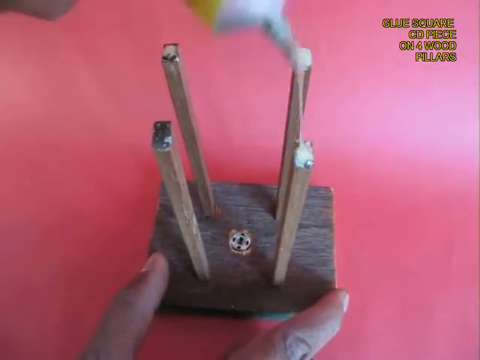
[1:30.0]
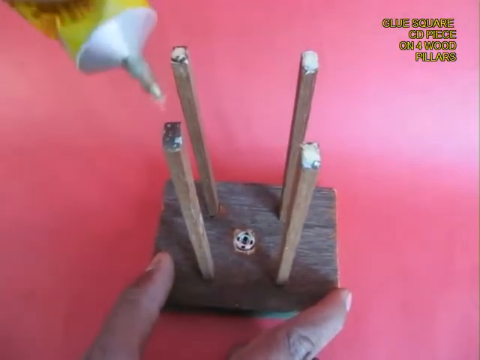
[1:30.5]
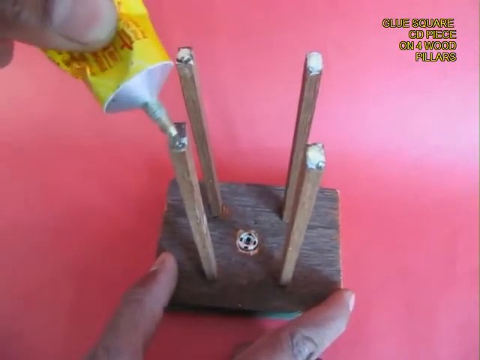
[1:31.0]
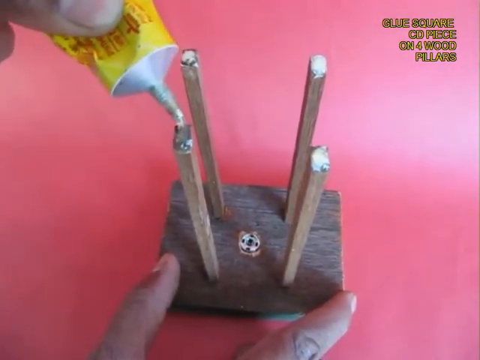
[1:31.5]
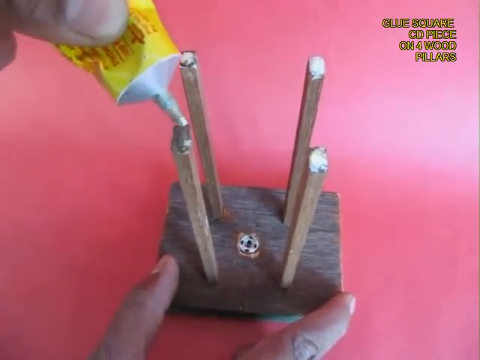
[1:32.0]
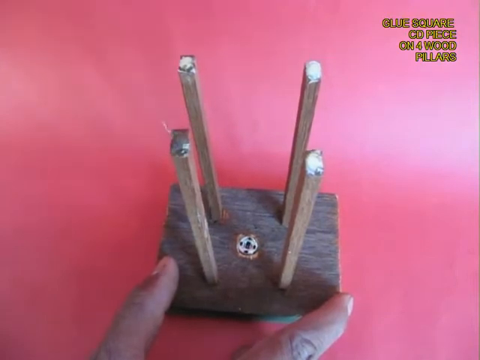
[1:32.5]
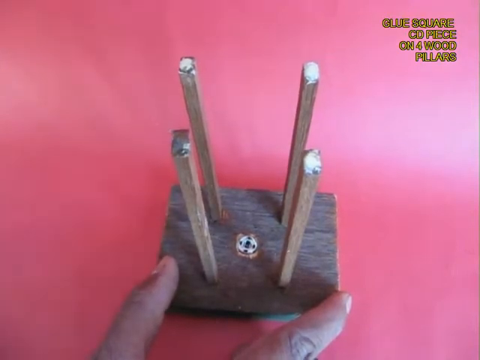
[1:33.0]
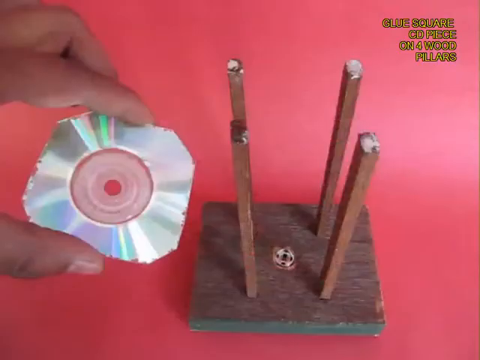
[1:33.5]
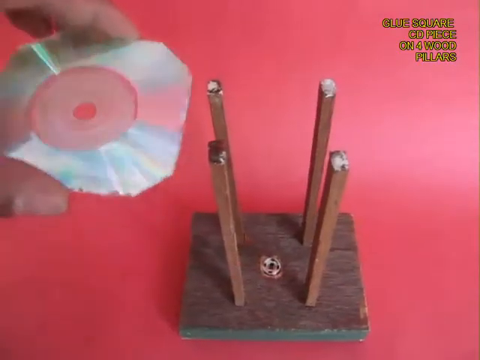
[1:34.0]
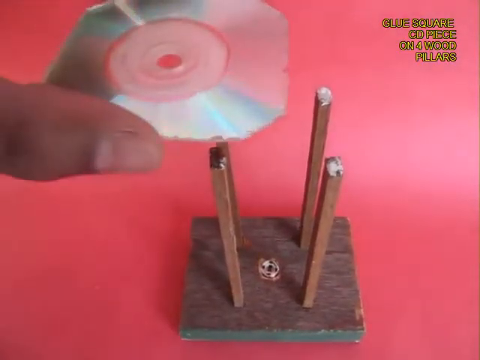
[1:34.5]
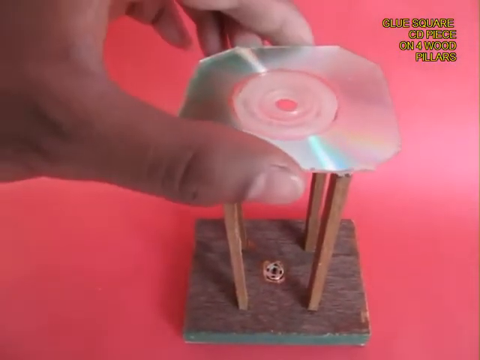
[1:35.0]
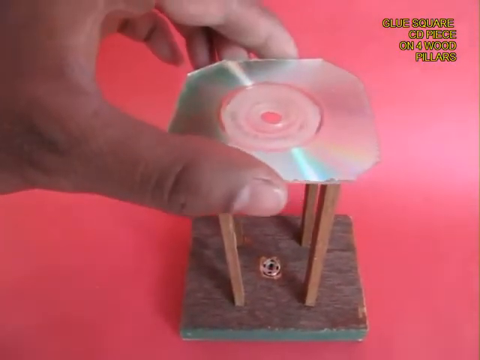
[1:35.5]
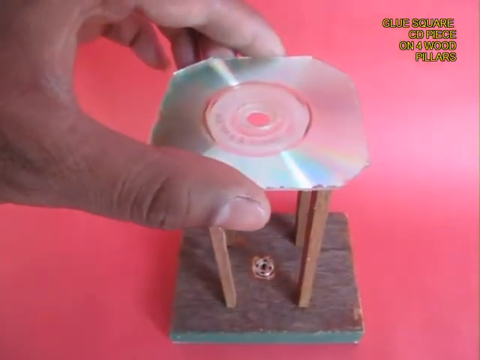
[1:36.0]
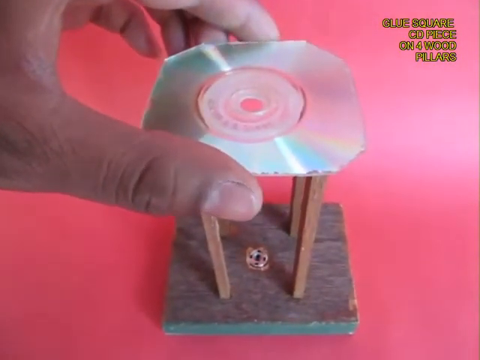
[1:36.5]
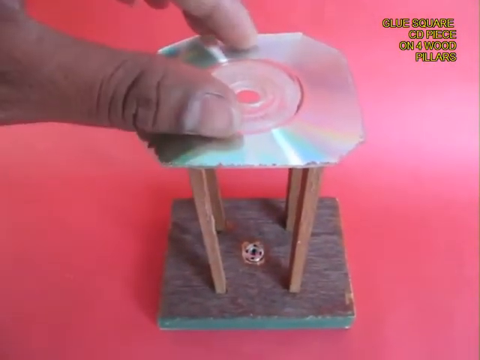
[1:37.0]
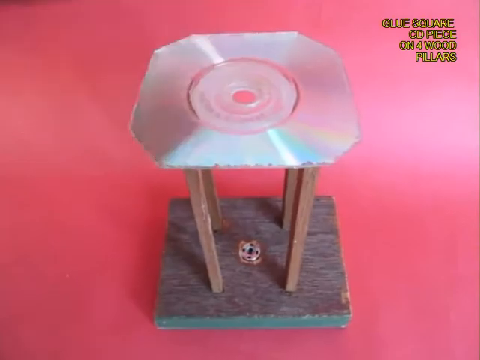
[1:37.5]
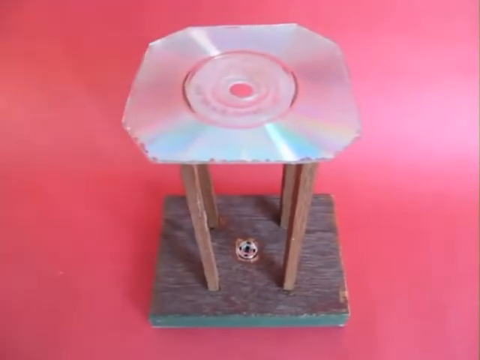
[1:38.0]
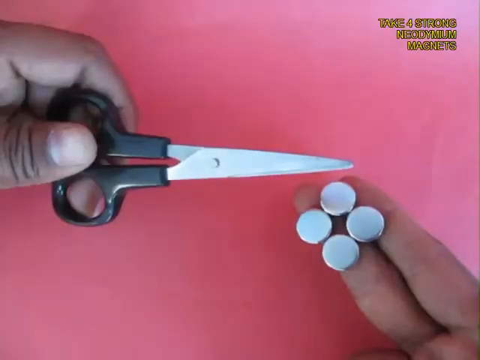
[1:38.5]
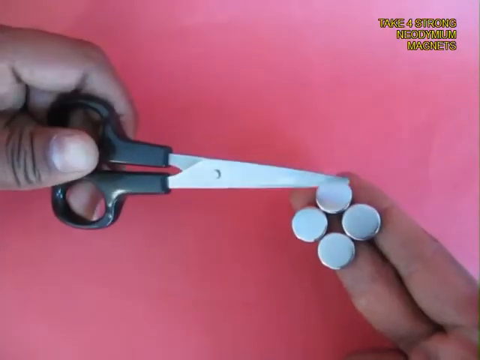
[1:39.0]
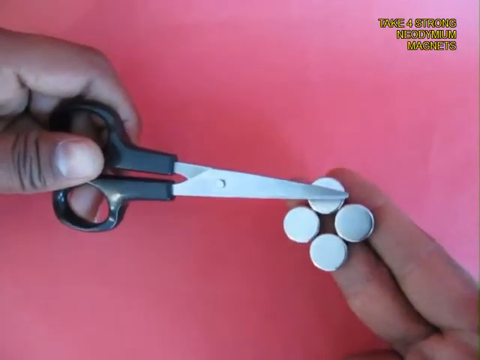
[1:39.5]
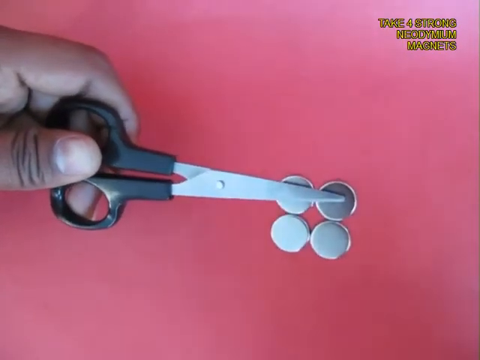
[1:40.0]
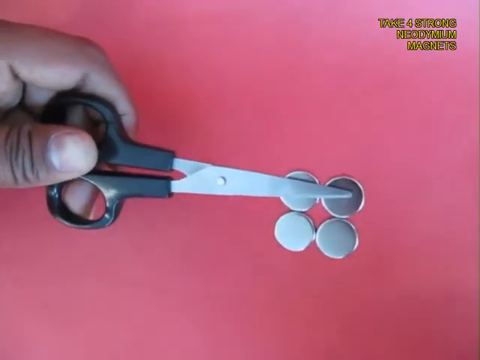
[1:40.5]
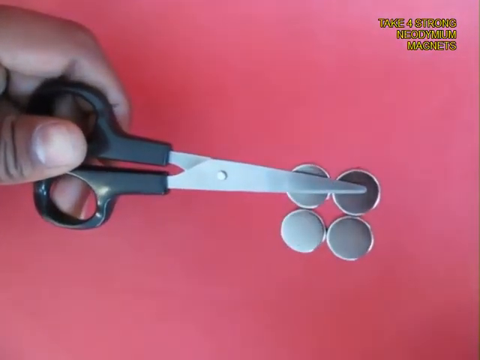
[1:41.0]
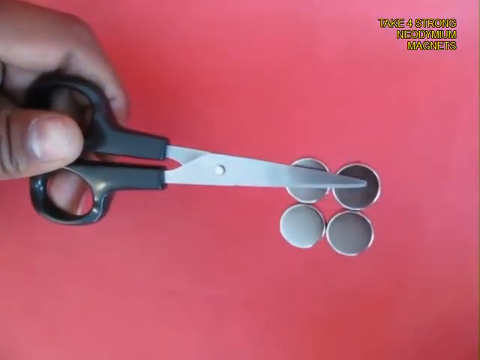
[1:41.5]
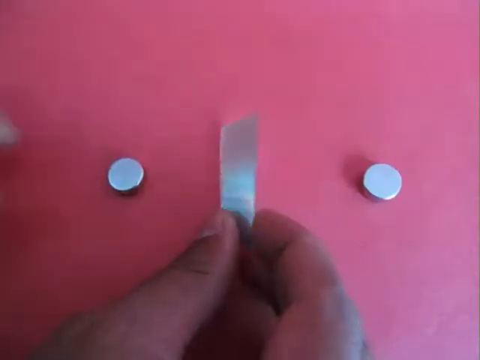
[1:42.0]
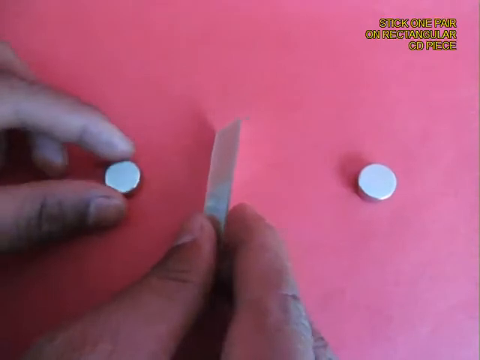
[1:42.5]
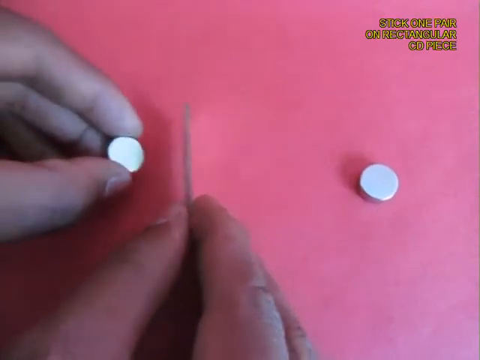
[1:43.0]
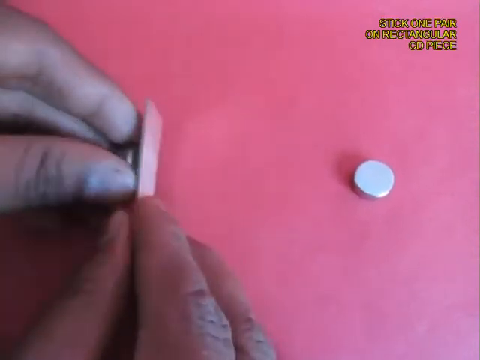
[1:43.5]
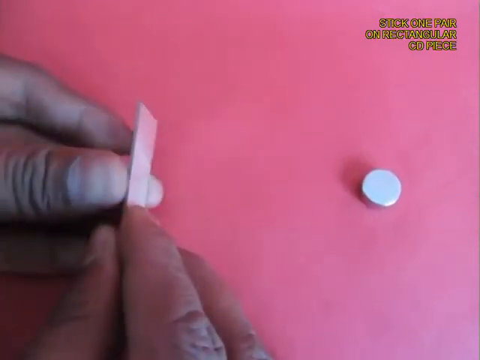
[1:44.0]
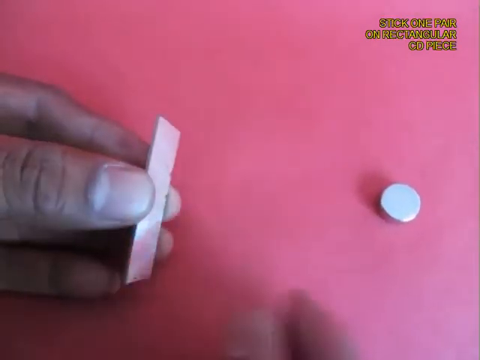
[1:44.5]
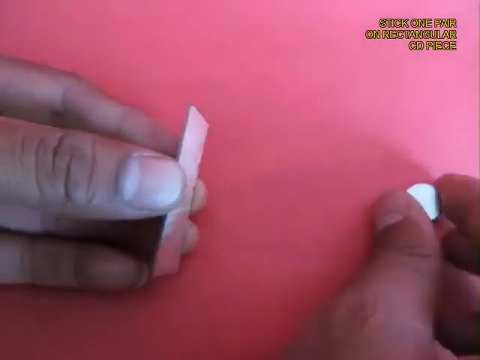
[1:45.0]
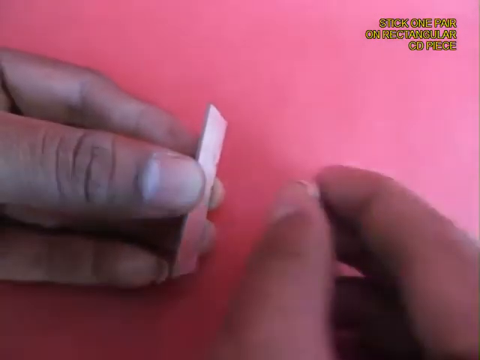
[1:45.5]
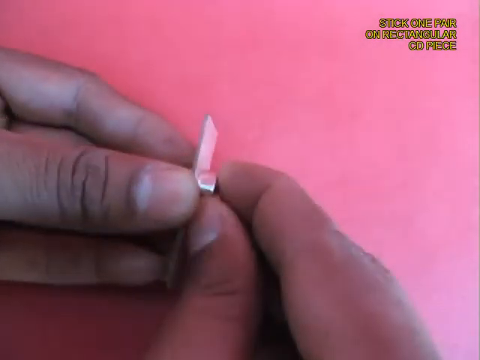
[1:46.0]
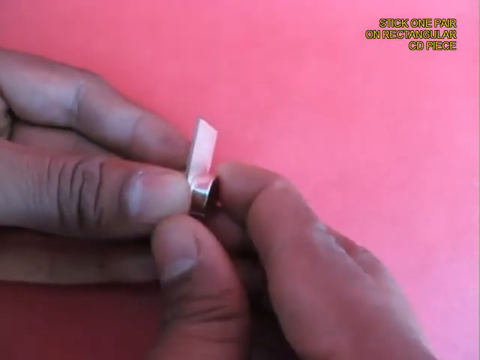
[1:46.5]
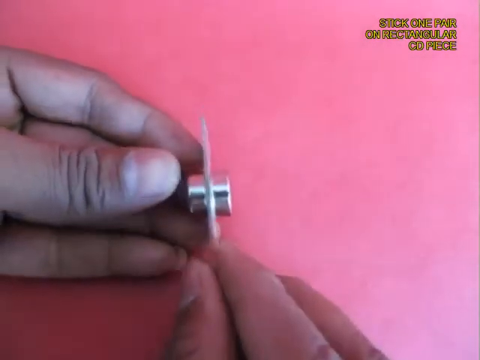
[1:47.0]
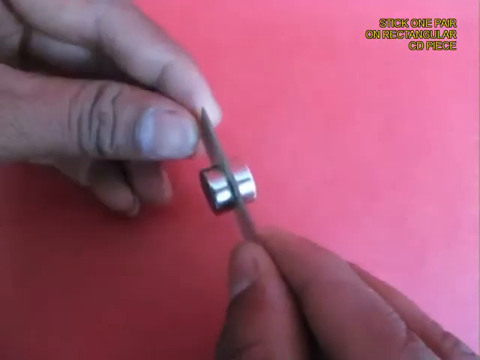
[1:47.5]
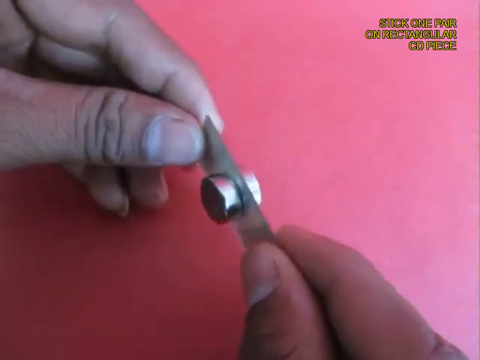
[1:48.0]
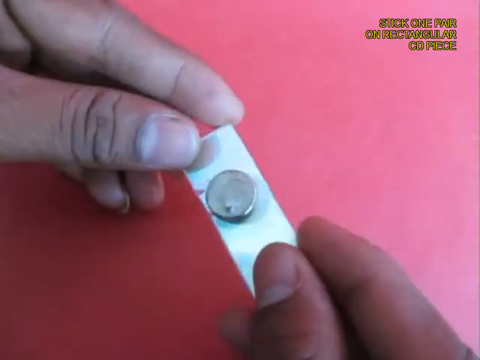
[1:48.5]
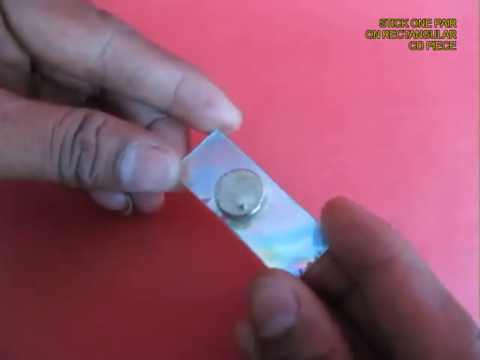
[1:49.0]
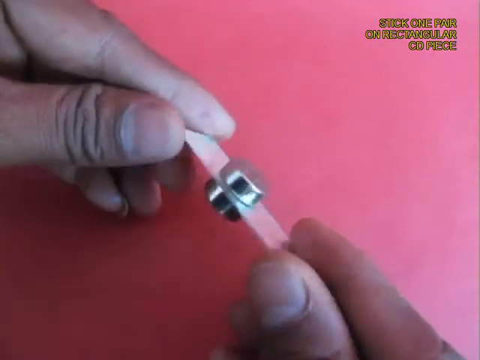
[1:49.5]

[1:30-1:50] The rest of the four wood pillars are placed with some glue on top; they are applying it to the lower left part of the four pillars, then remove the glue. In a new shot, the left hand holds the CD piece, places it on top of the four wood pillars, and presses it down onto them. Next, the left hand holds a pair of scissors while the right hand's middle and index fingers hold the four magnets, with the red table in the background. The left hand moves closer to the fingers holding the magnets, and with the scissors hovering over the magnets they connect with each other. The right hand leaves the frame and the left hand brings the magnets with the scissors closer to the camera. In another shot, there is a magnet on the right side and a magnet on the left side; the right hand holds a rectangular CD piece and the left hand holds a magnet, putting the magnet and the CD piece together, then putting the other magnet on the other side, so there is a magnet on the left and right sides of the CD piece.